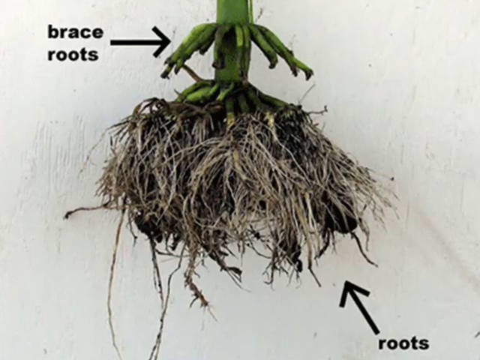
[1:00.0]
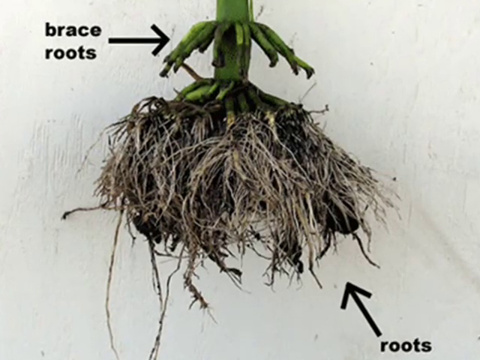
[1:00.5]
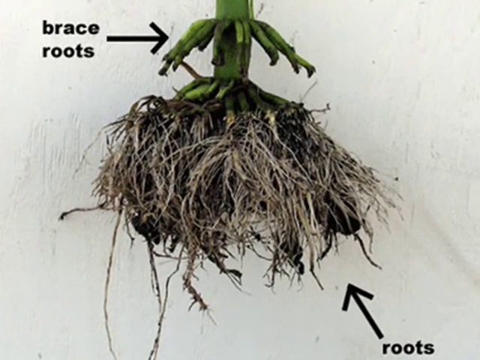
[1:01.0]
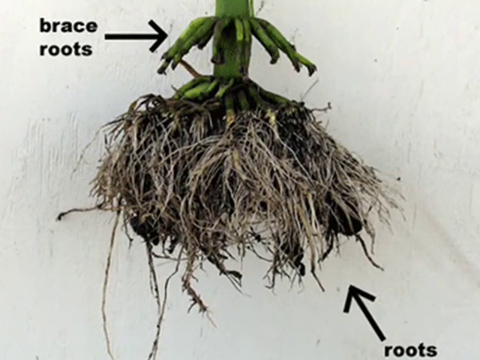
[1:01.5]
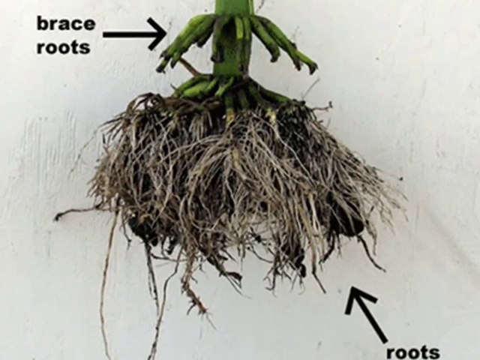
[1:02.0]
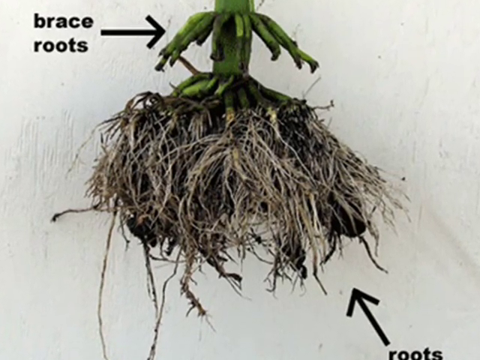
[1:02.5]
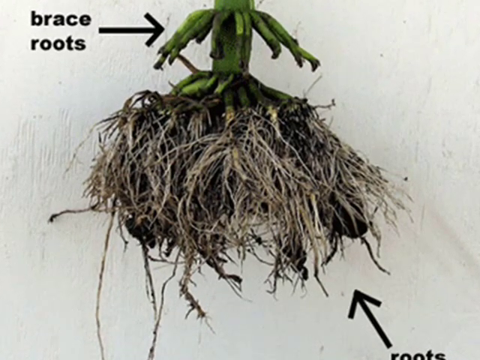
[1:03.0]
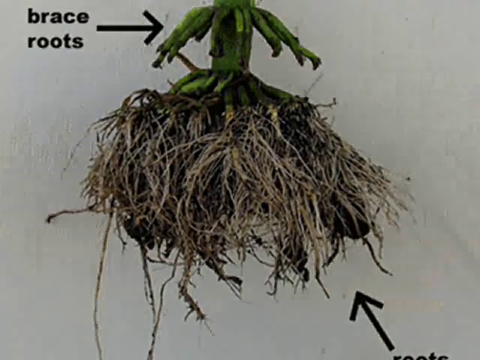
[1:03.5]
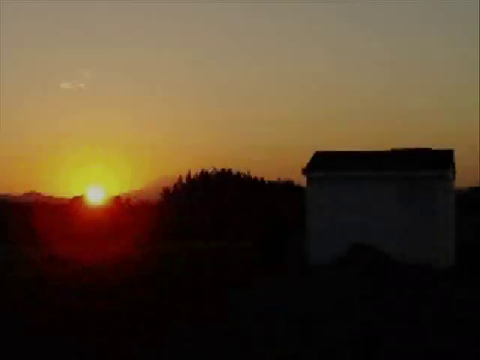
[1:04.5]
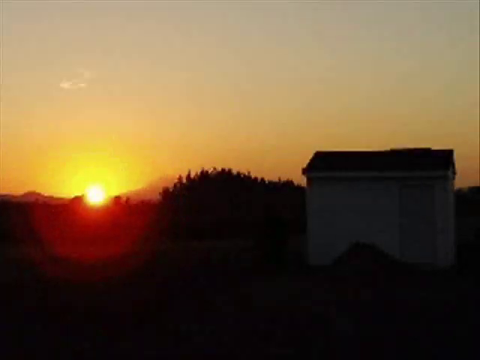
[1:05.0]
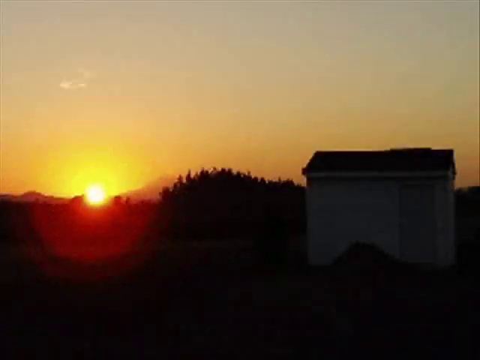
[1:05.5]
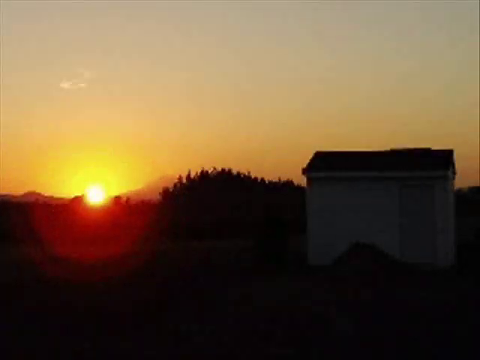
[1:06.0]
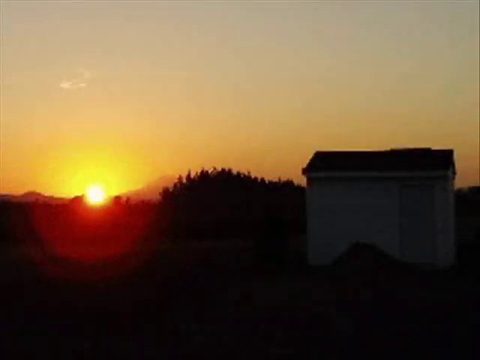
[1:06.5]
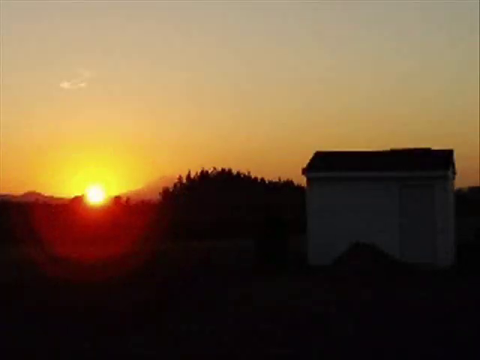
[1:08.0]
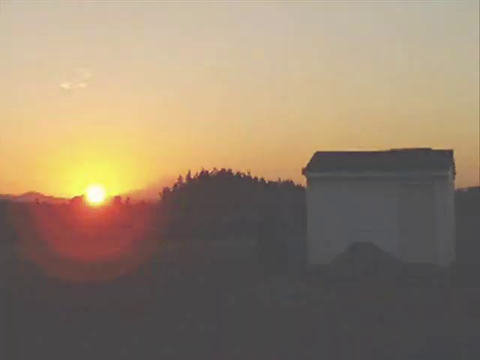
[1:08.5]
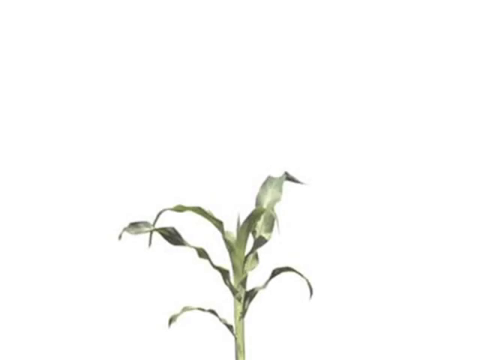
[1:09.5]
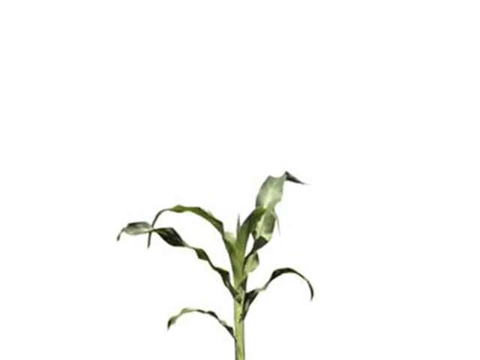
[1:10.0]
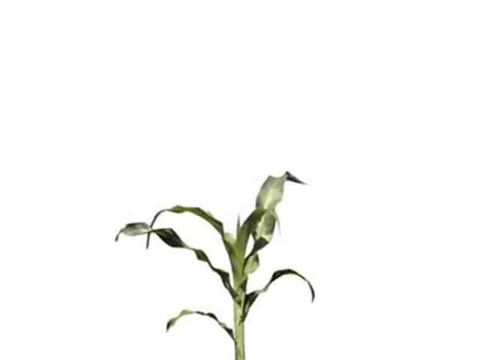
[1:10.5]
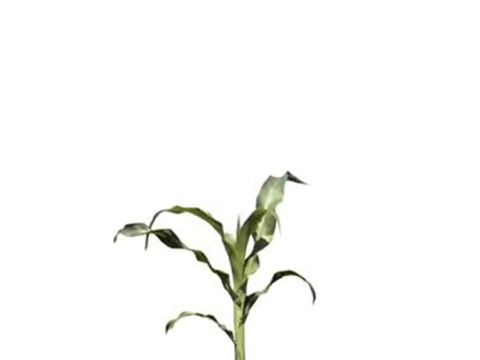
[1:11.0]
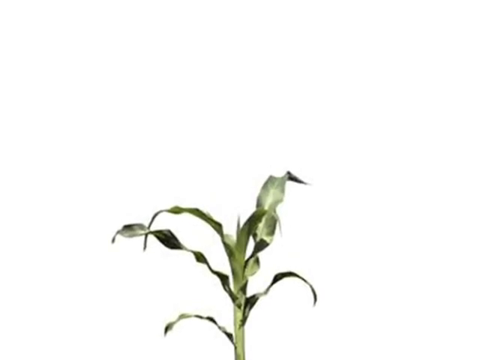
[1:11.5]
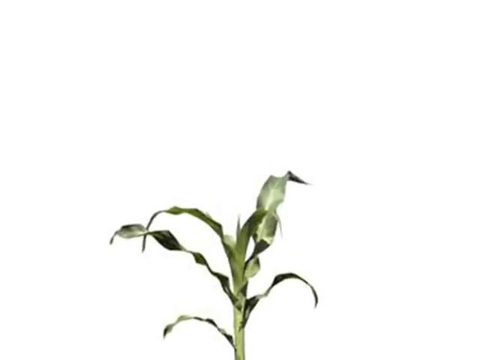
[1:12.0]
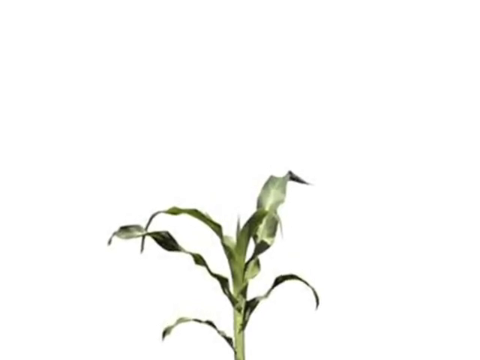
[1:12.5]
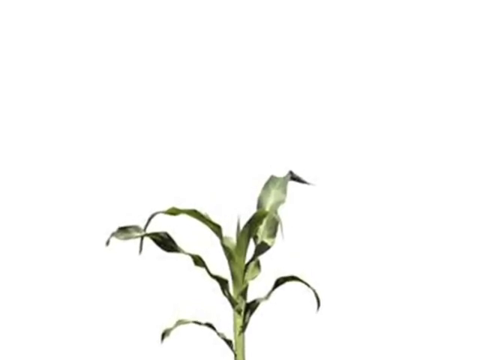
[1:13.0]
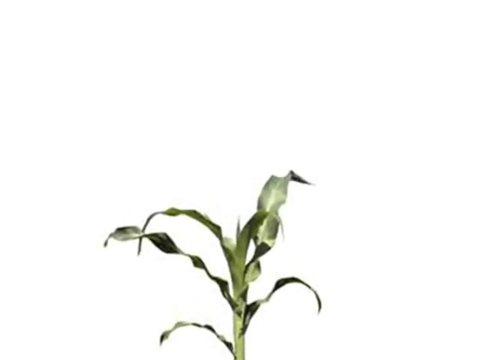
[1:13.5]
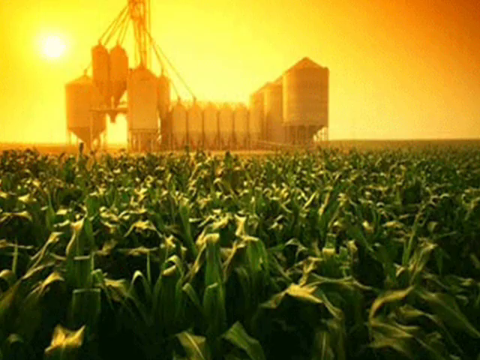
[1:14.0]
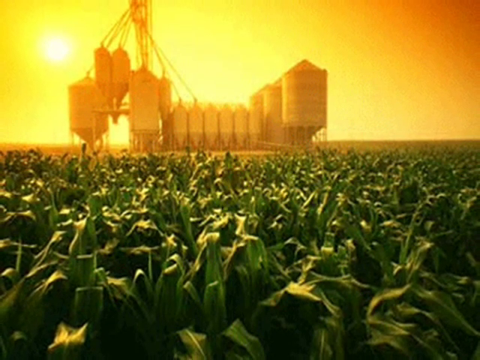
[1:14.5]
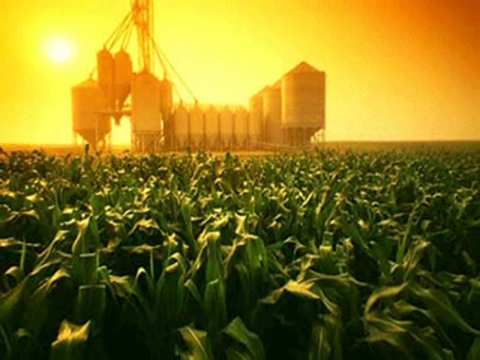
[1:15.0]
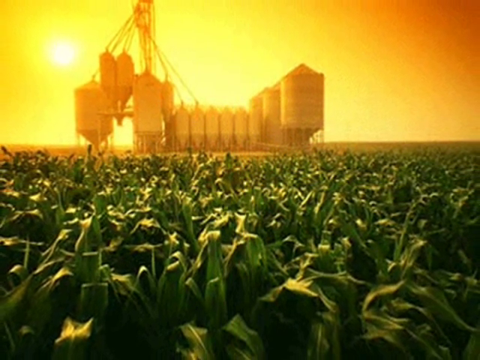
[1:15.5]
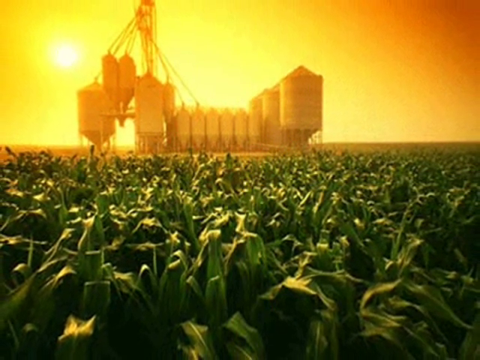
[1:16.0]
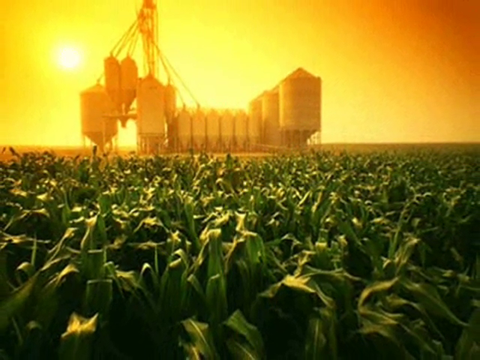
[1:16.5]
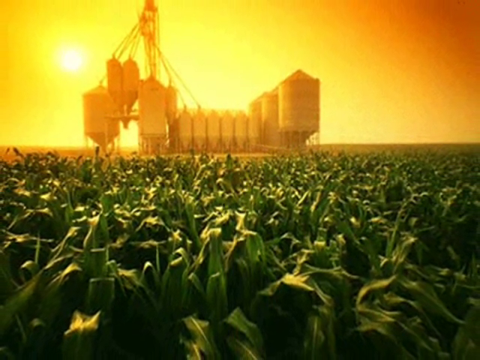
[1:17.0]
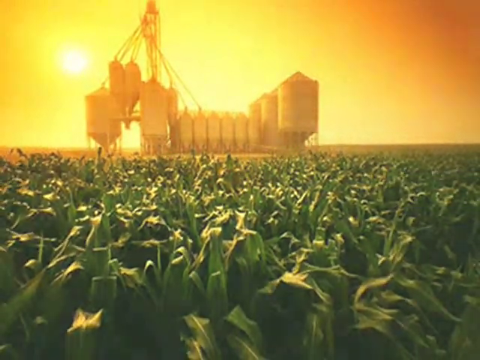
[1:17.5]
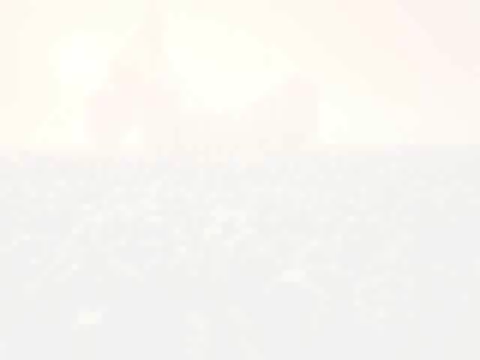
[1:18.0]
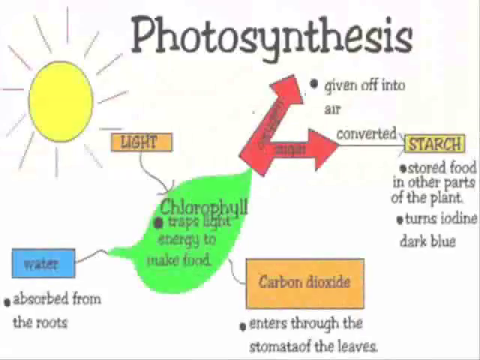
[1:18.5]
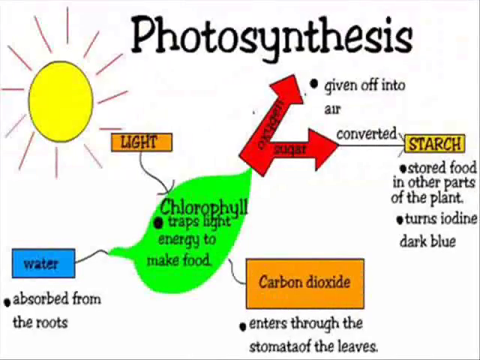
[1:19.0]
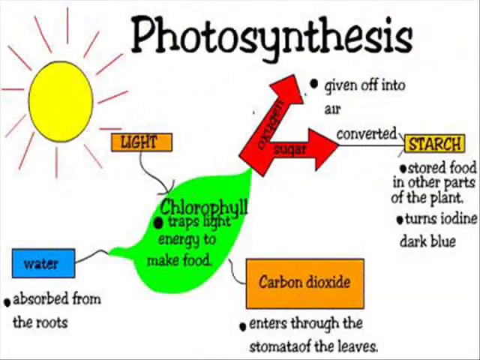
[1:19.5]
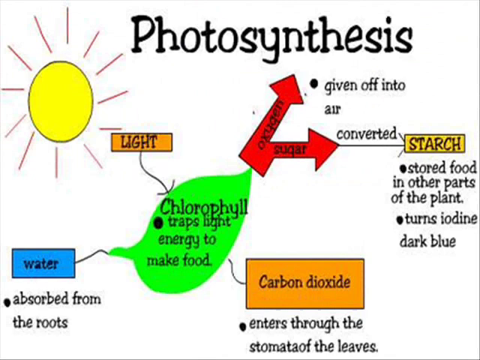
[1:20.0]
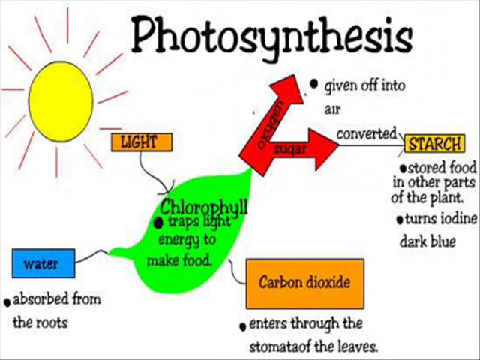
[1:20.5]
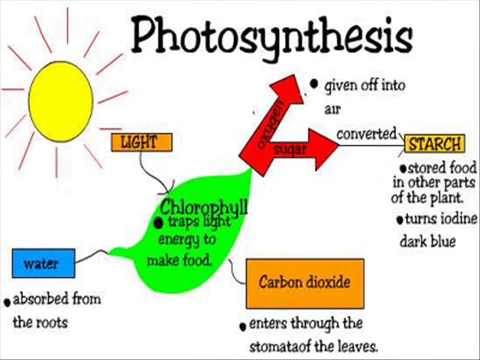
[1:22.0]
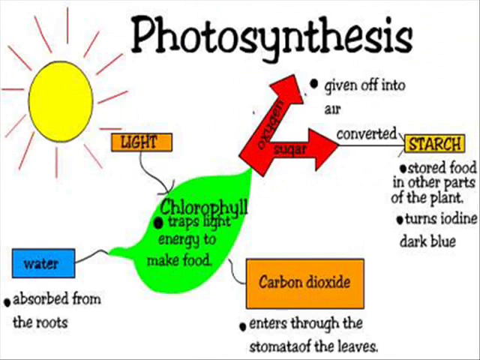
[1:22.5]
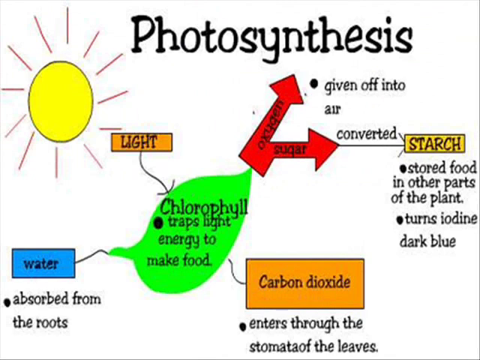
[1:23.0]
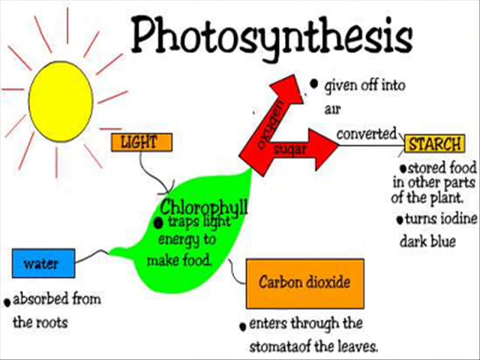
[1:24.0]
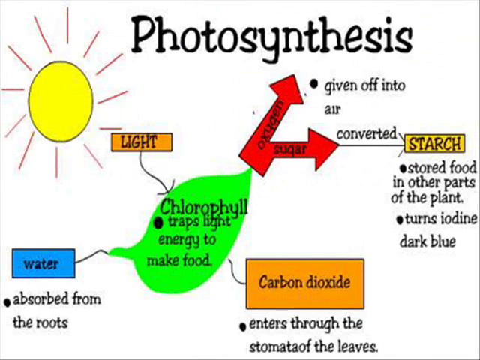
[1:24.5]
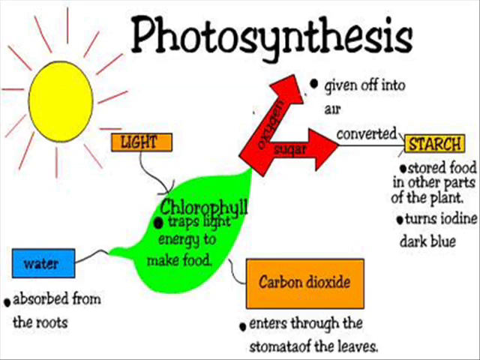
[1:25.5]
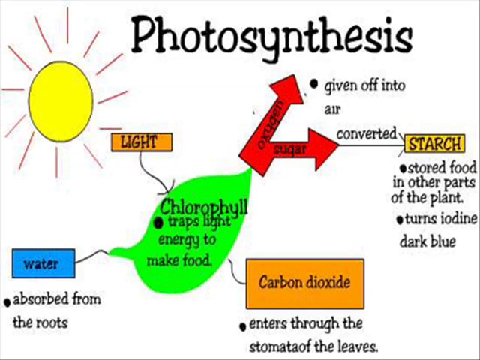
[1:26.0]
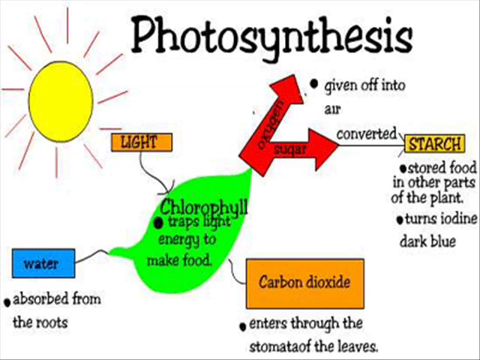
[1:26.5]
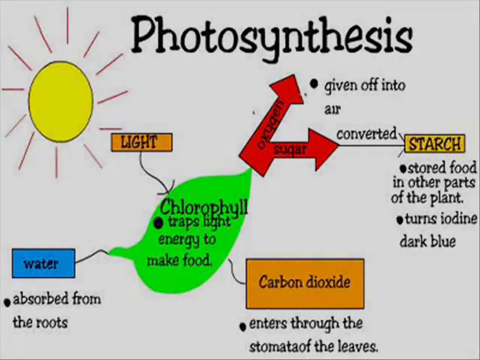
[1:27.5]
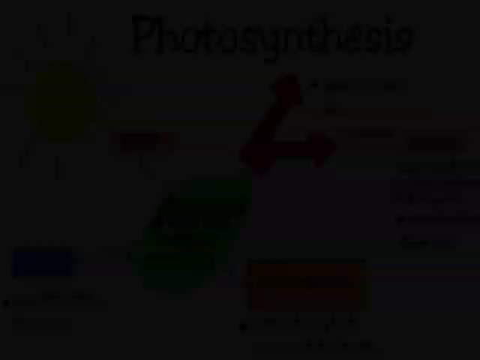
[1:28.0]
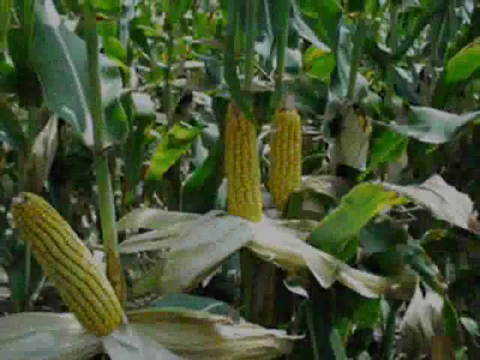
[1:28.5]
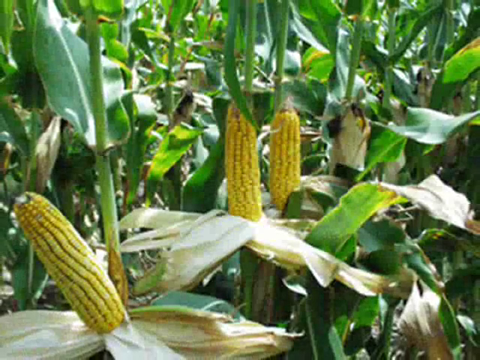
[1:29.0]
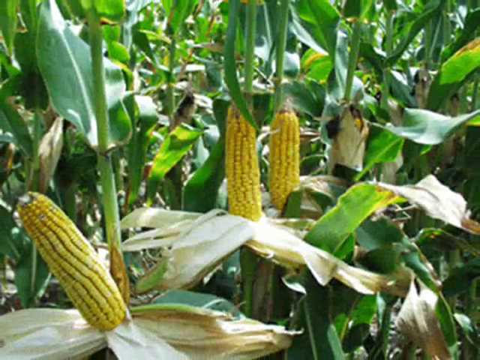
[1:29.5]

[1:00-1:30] The brace roots of the corn are still shown. Next is a silhouette picture of a sun rising or setting over a farm. The view then zooms in on a corn stalk against a white background. Corn is then shown with silos in the background and the sun low on the horizon. A colorful diagram of photosynthesis follows, covering light, water, carbon dioxide, chlorophyll, and the starch from the corn. Then the view zooms in on more corn in a field, peeled but still kind of on the stalk, looking healthy, in a zoomed-in picture of the corn stalks.